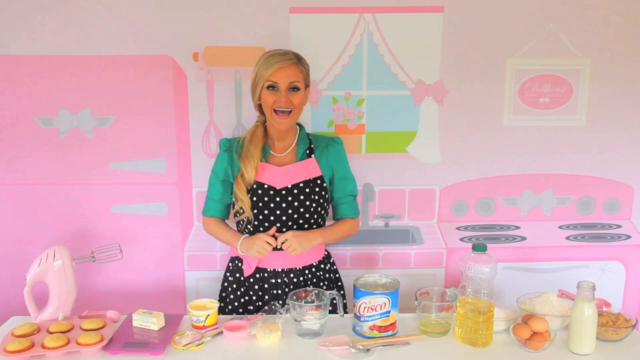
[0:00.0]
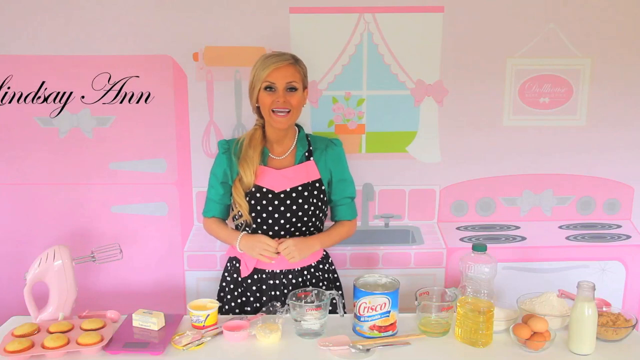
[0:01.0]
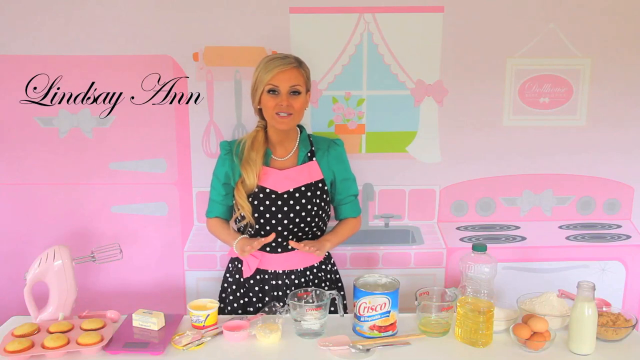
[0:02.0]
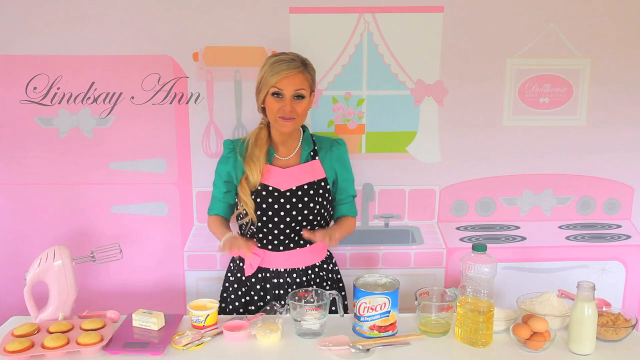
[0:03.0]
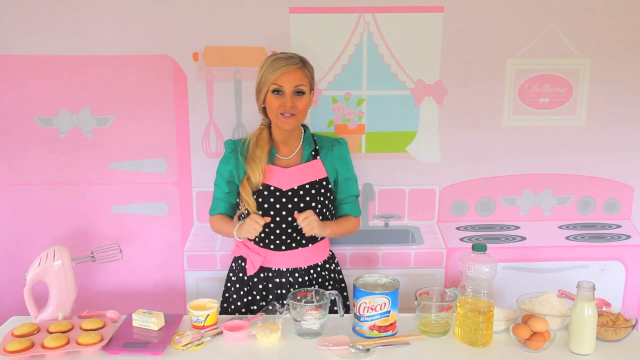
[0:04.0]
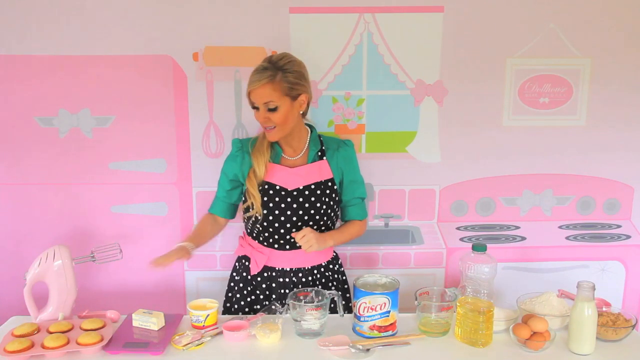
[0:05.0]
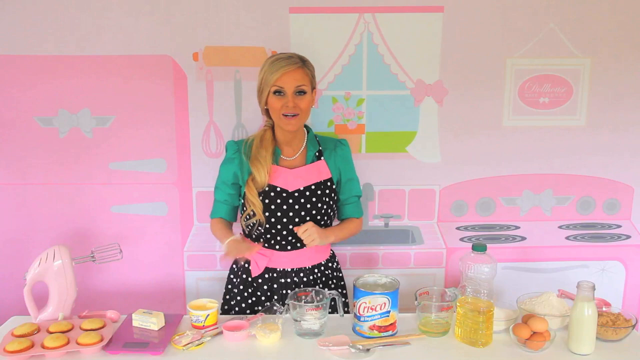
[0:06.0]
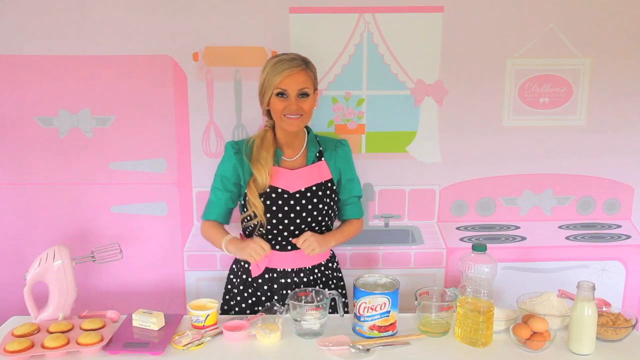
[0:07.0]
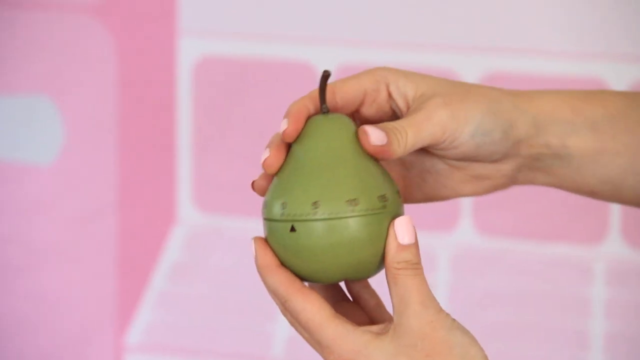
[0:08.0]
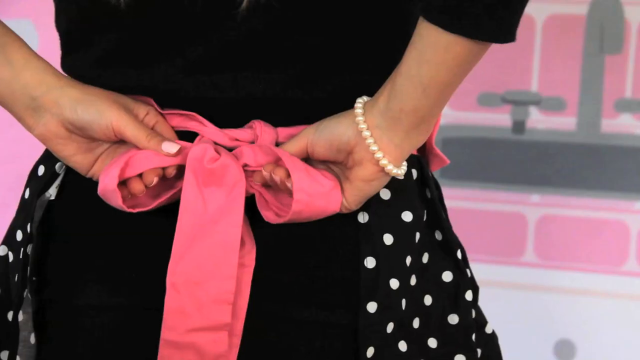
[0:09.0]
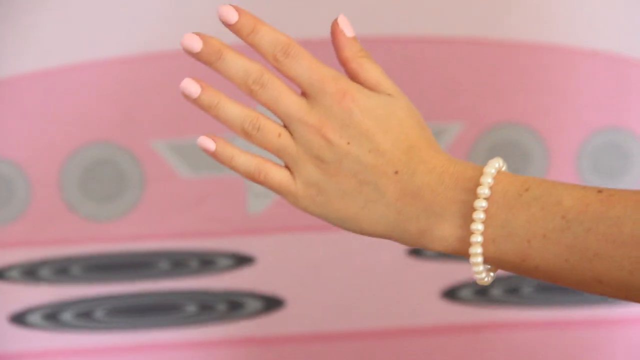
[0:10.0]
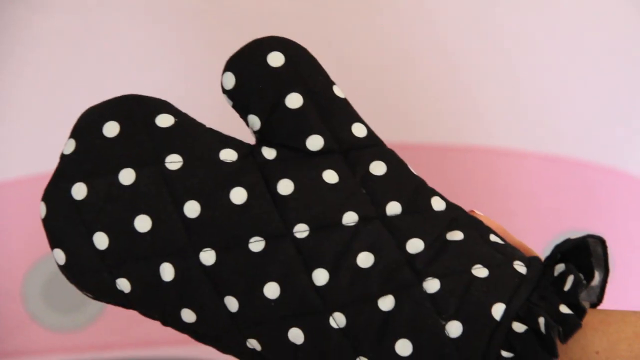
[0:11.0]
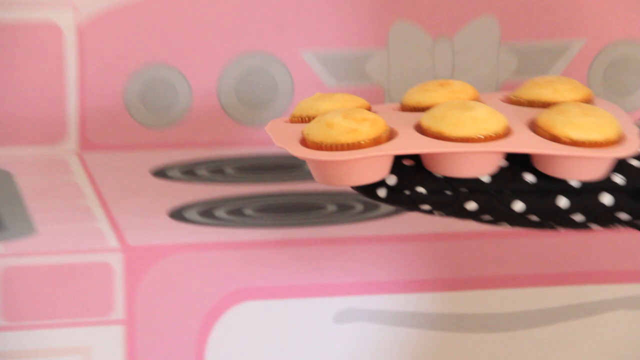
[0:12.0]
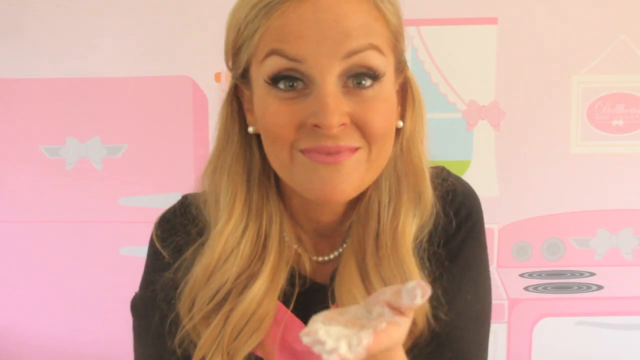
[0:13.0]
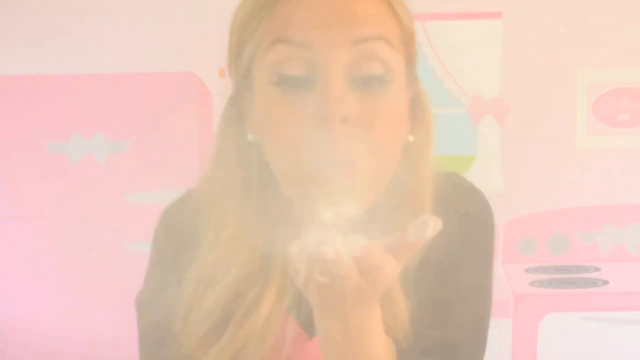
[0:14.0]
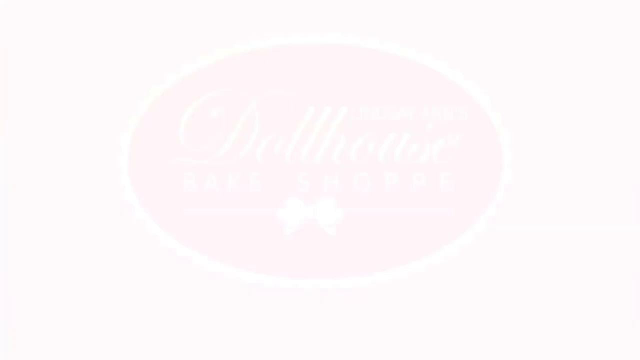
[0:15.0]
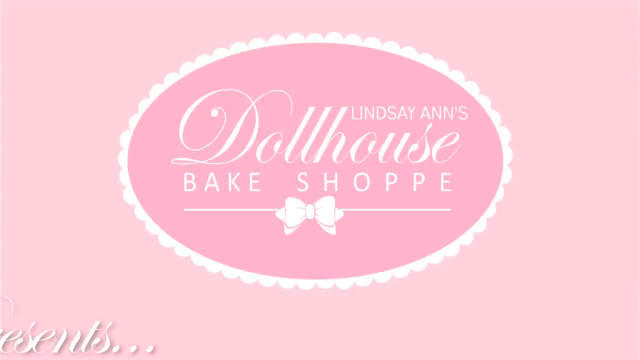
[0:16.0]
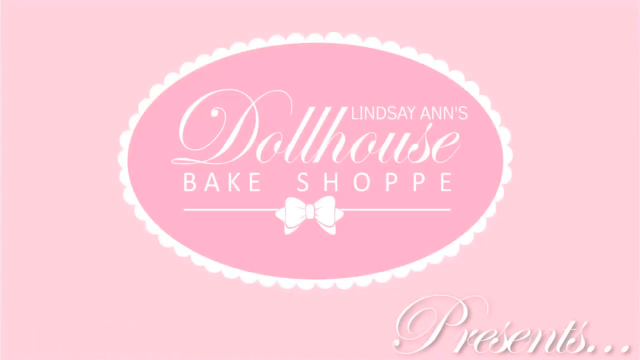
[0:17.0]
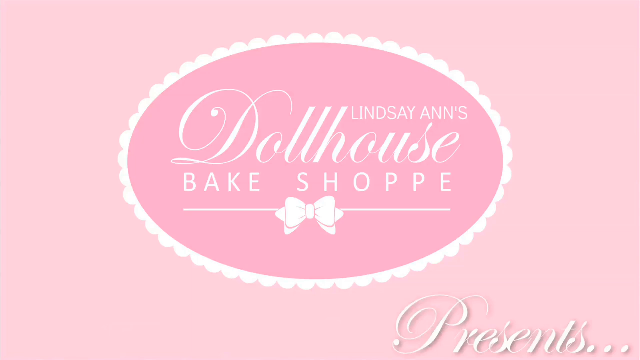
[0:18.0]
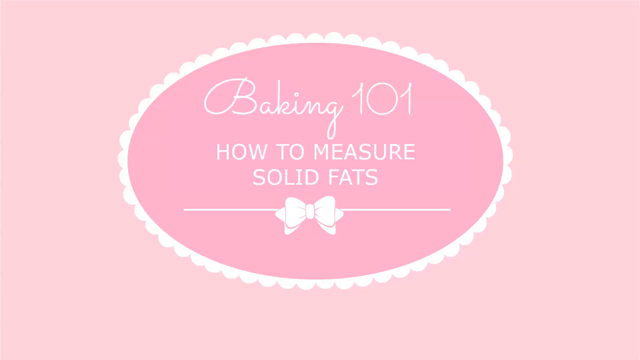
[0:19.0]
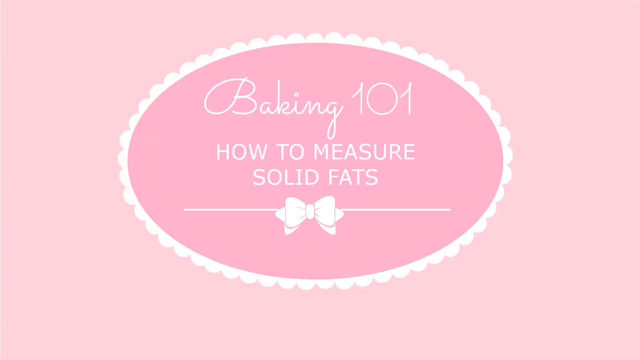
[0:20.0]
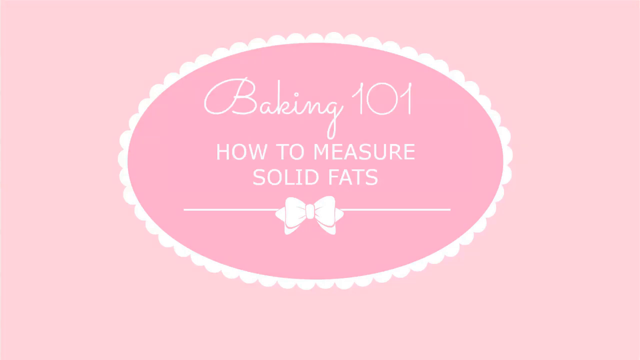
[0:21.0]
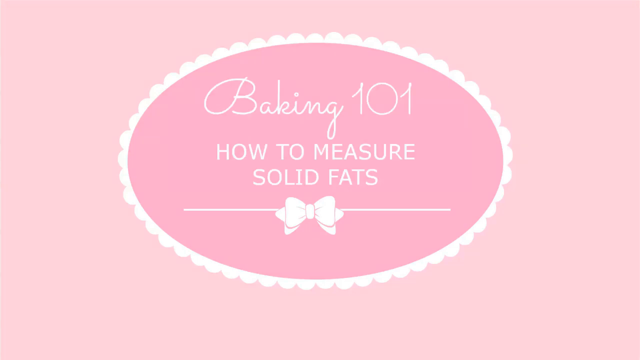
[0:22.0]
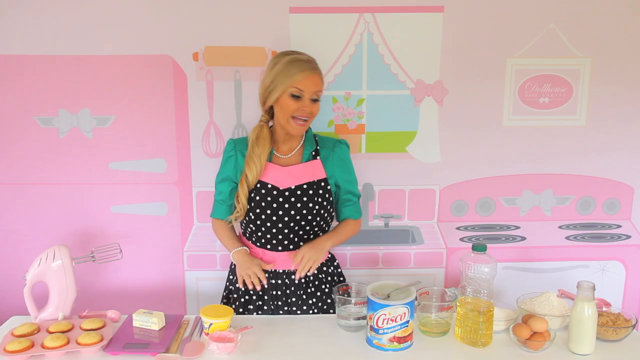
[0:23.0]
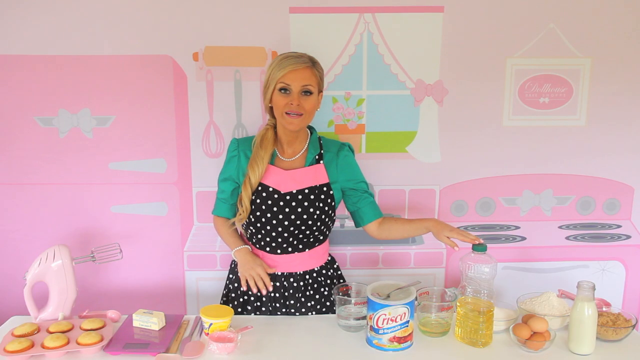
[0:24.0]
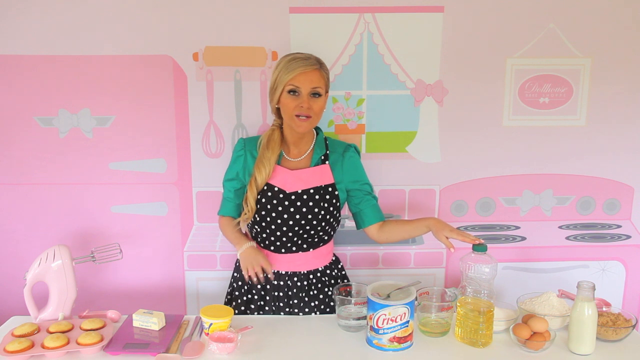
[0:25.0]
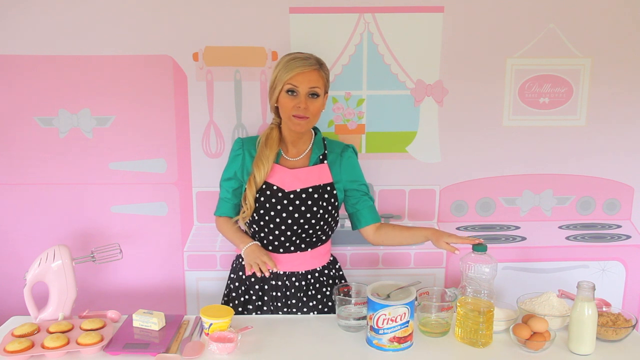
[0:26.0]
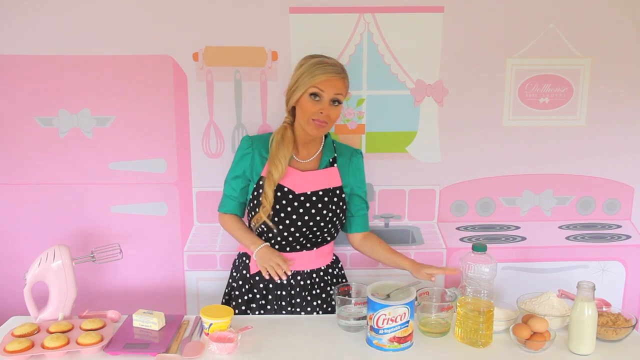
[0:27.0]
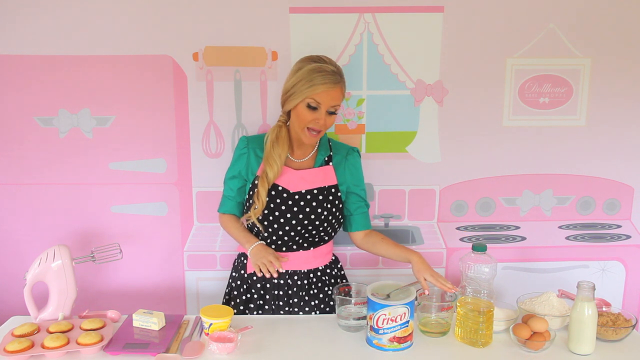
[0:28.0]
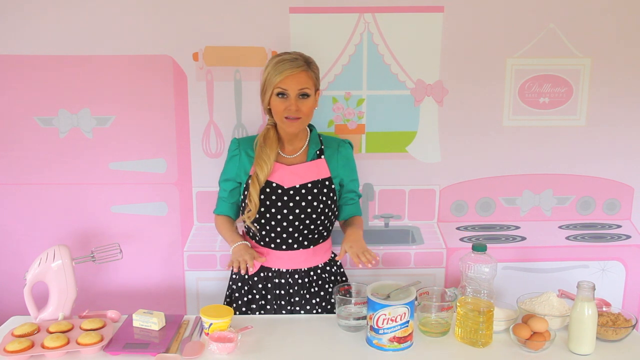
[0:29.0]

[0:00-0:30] The video opens in a pink environment that seems playful. A blonde woman stands with baking materials in front of her, including canned goods and glass containers, along with a bottle of what appears to be cooking oil. Behind her is a pink playroom with a pink fridge, a pink whisk and other pink items, including the oven and the stove, with a sink in the same space. Her hair is tied and pulled over to the left side of her shoulder. She wears pink gloves and a black apron with white dotted lines, and a name is written in black on the left side that reads "Linsay", possibly her name. She keeps describing and holding various products on her kitchen table, apparently explaining them and their uses. She then picks up what appears to be a green timer and sets it.